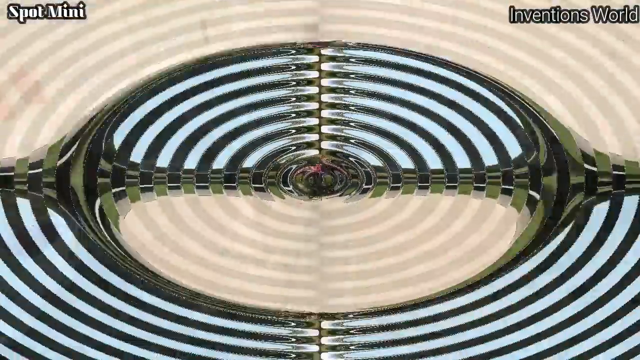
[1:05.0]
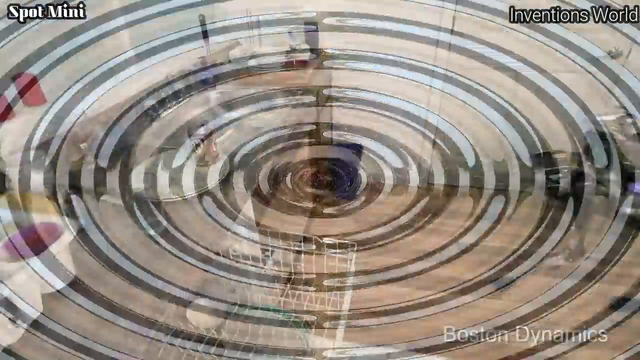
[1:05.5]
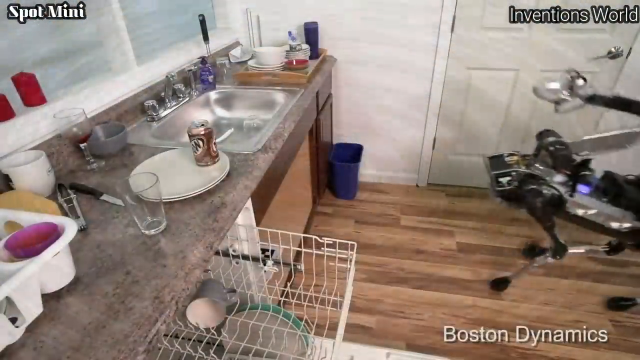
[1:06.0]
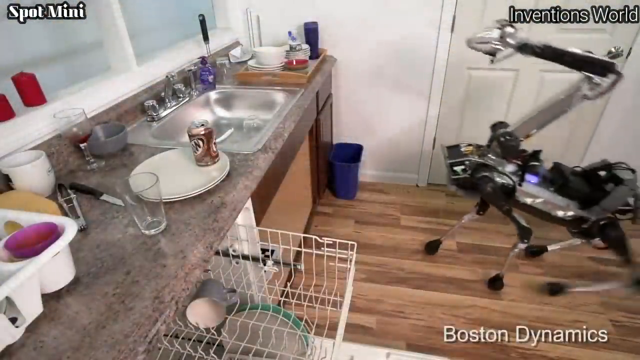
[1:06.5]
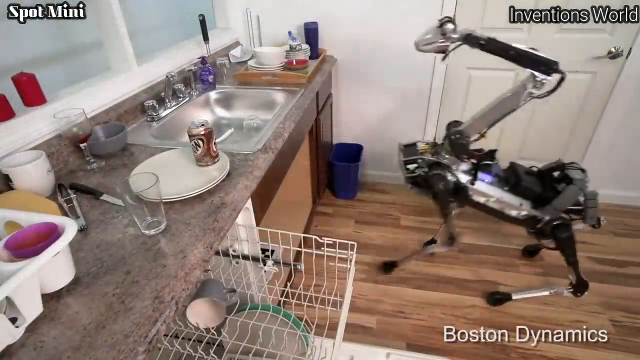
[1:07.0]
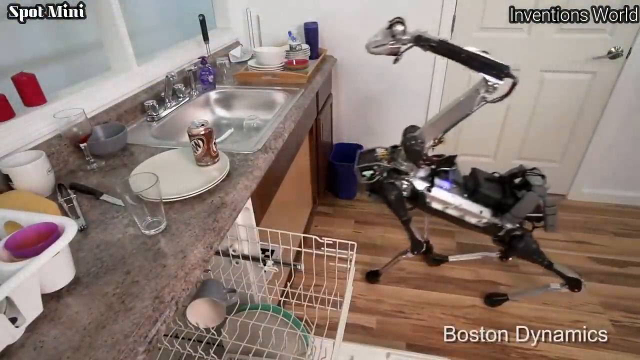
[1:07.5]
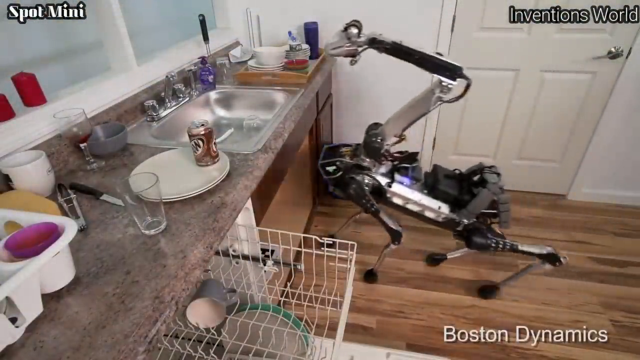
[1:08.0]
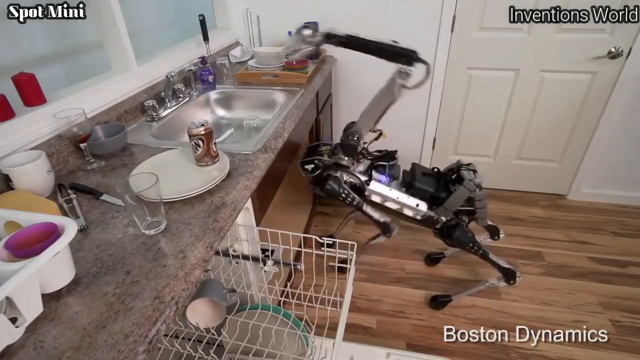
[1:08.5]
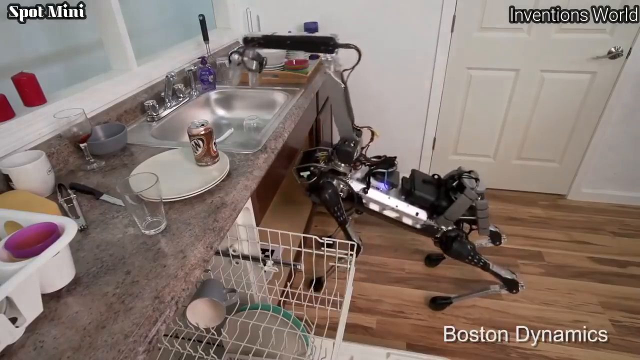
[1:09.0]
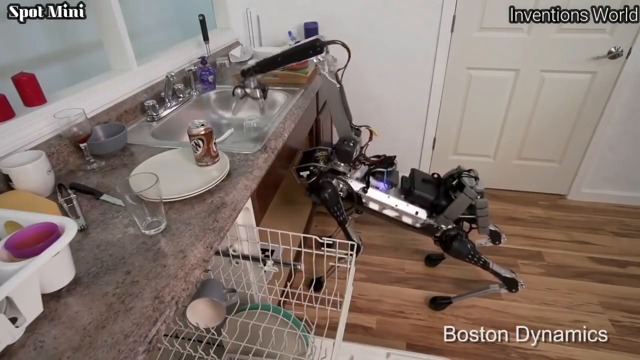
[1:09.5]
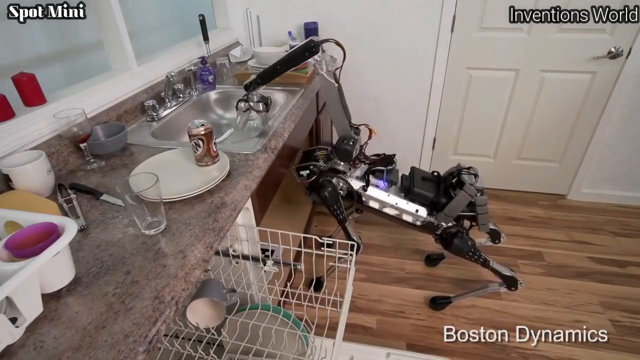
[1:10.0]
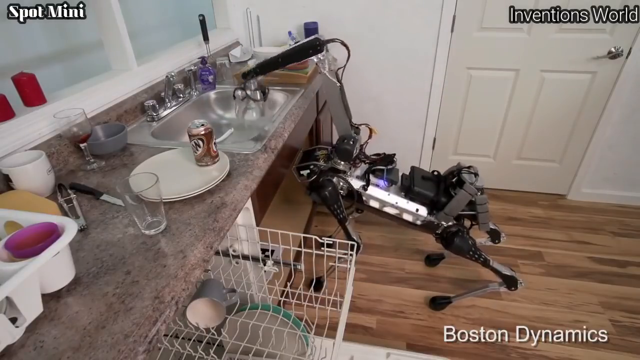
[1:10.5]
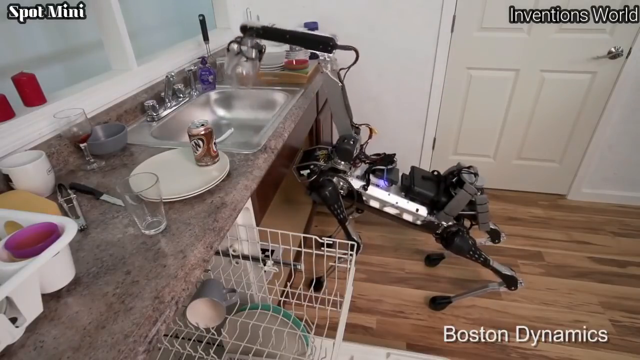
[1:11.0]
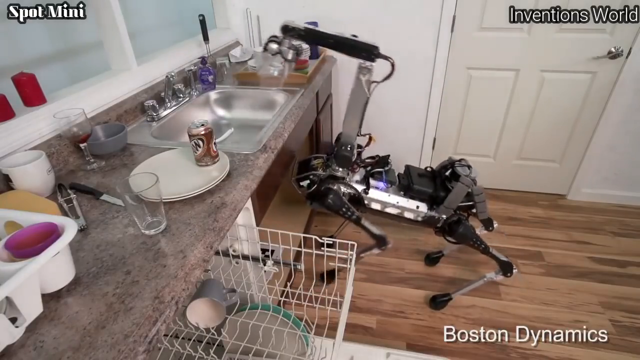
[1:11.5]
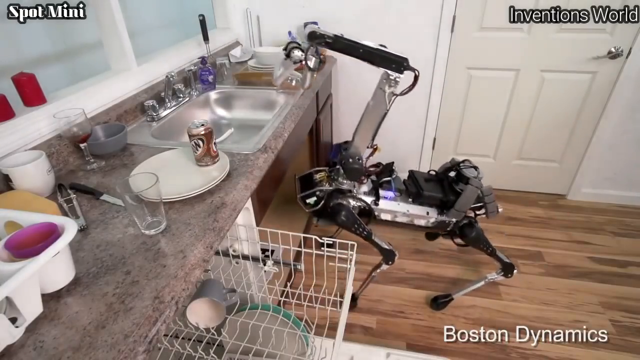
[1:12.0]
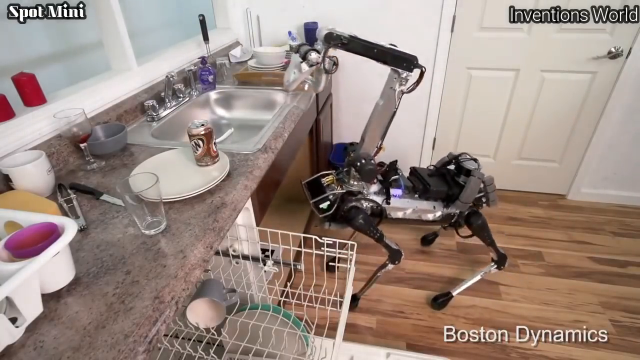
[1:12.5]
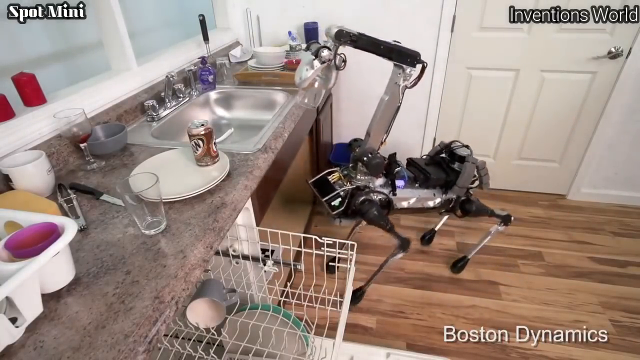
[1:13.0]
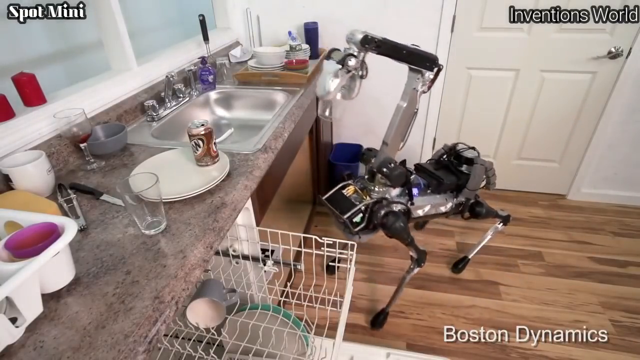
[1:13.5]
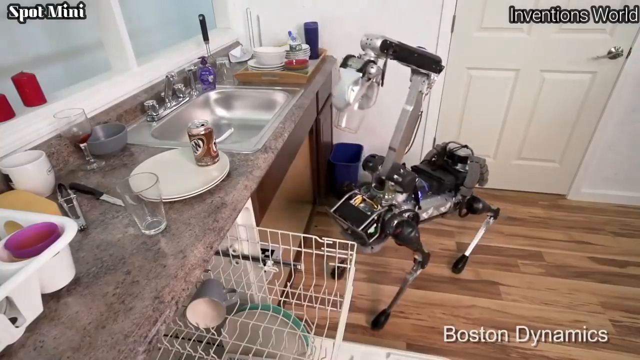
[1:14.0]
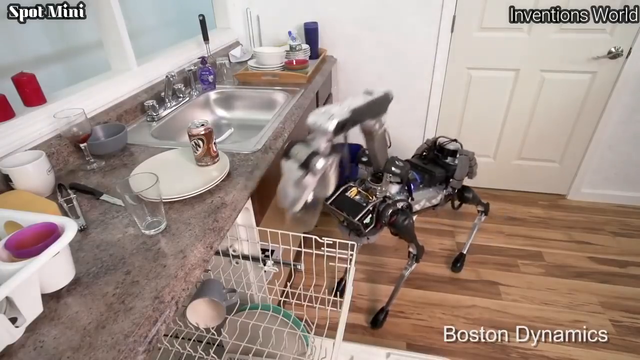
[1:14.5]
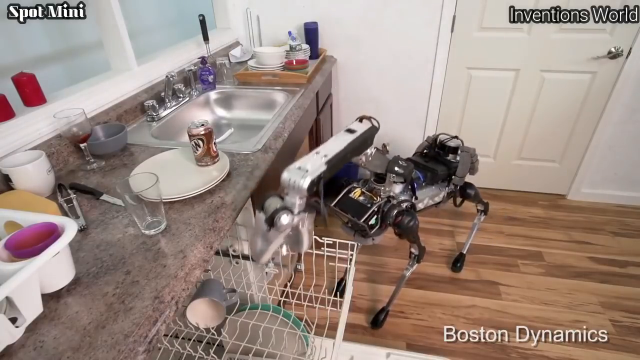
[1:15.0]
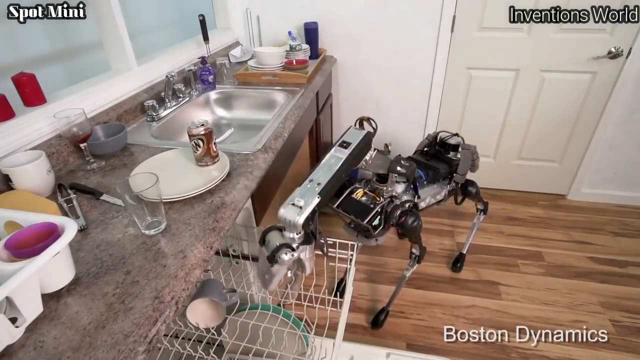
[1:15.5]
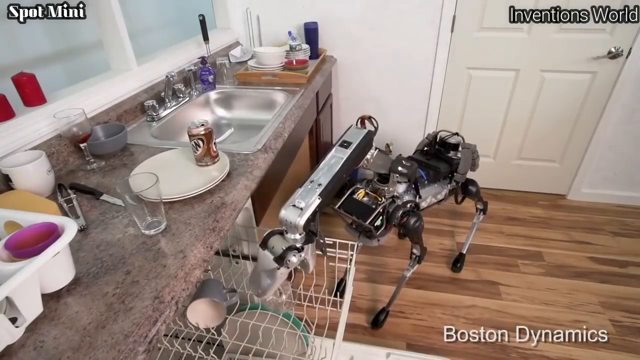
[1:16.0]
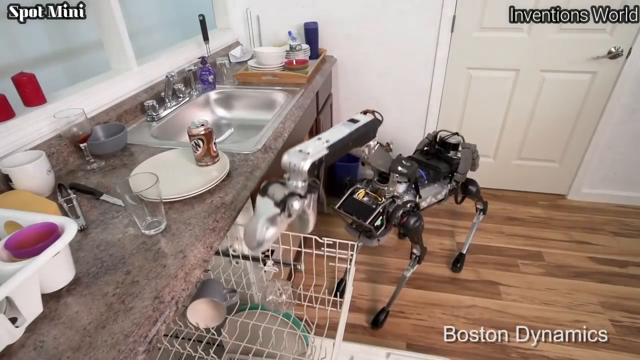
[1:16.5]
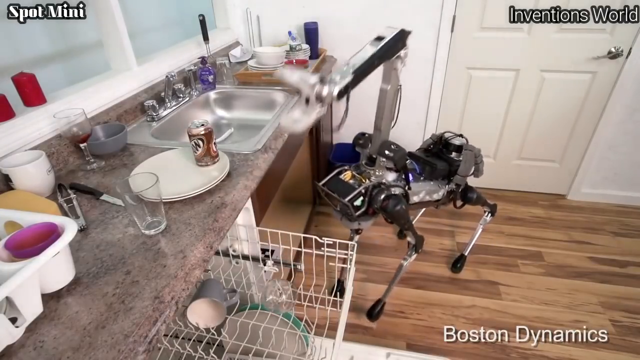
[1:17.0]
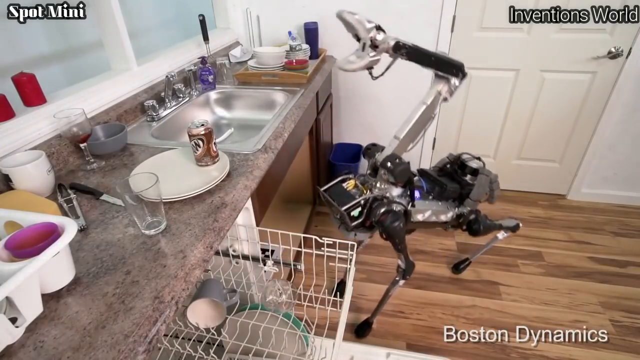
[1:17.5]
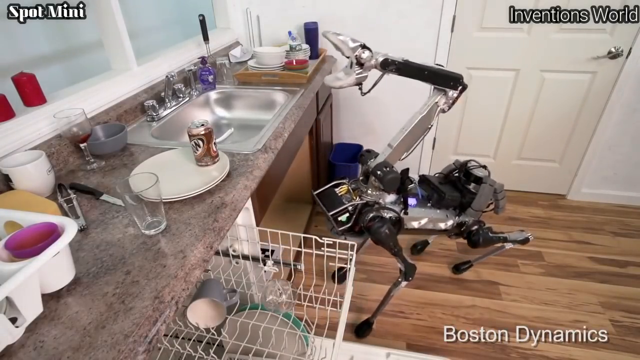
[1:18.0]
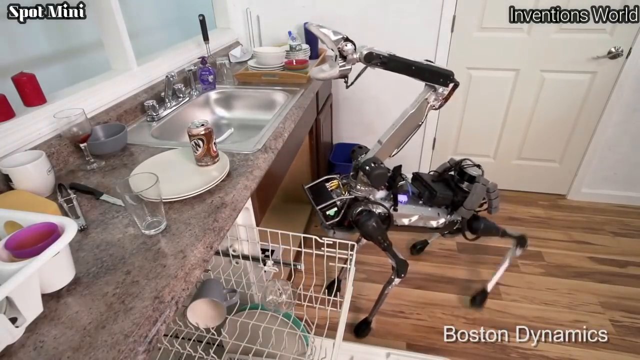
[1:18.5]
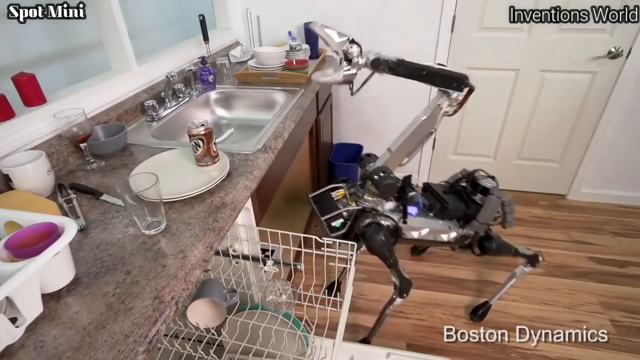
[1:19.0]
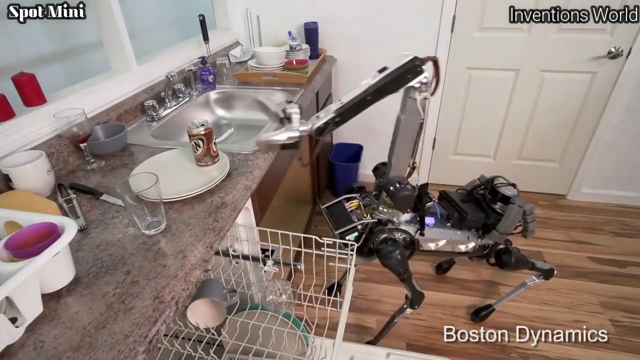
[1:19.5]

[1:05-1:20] The bubble resolves into a kitchen, where the silver robot with the long snake head walks up to the counter and lifts its head up over the kitchen sink. The dishwasher is open, and the area around the sink is fairly cluttered with dishes and an A&W root beer soda can. The robot moves forward, sticks its head into the sink, picks out a transparent, hard-to-see glass, and moves it over to the dishwasher. It then goes to pick up the soda can when the bubble graphic starts again and fades out.